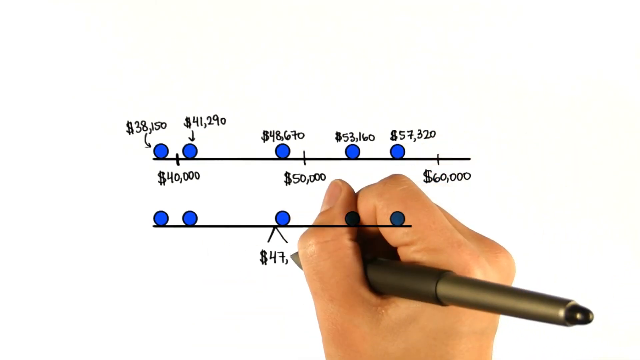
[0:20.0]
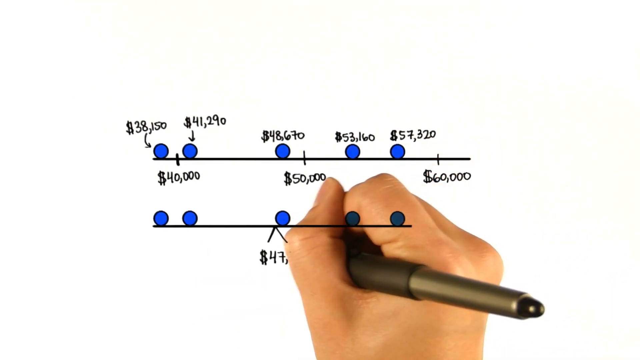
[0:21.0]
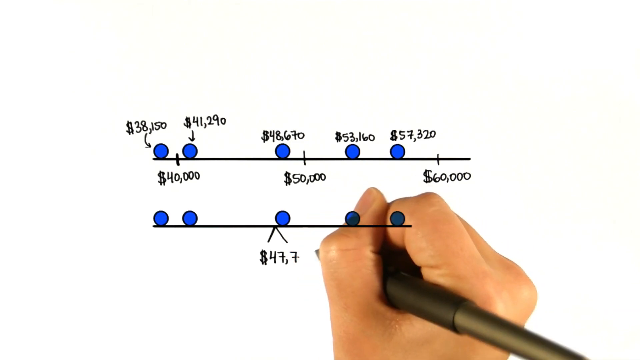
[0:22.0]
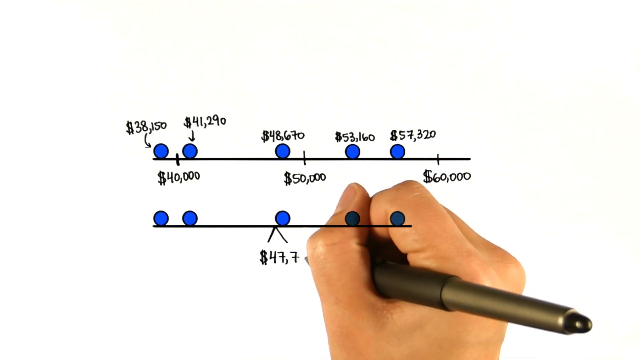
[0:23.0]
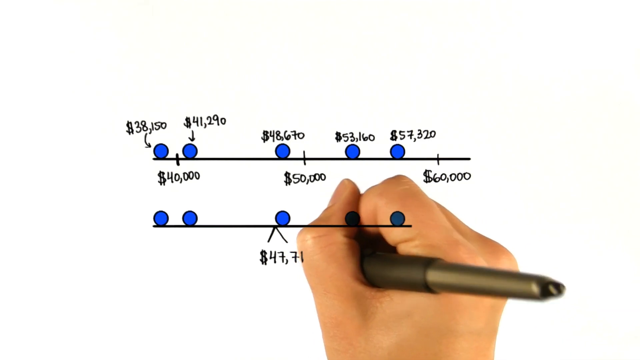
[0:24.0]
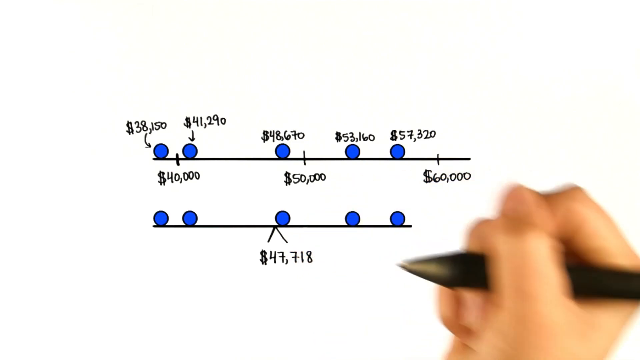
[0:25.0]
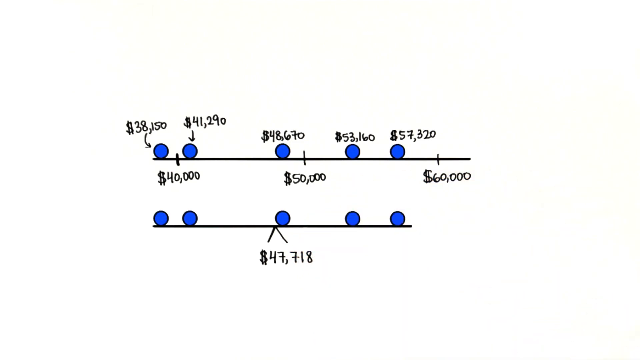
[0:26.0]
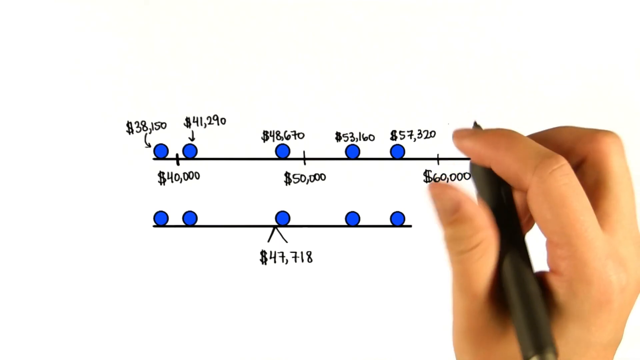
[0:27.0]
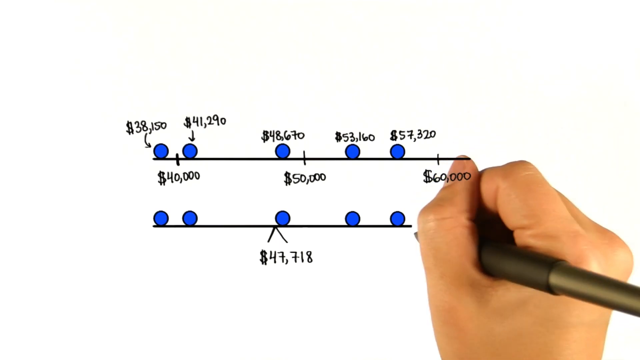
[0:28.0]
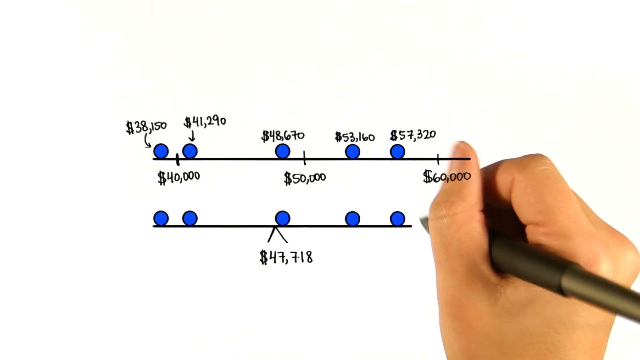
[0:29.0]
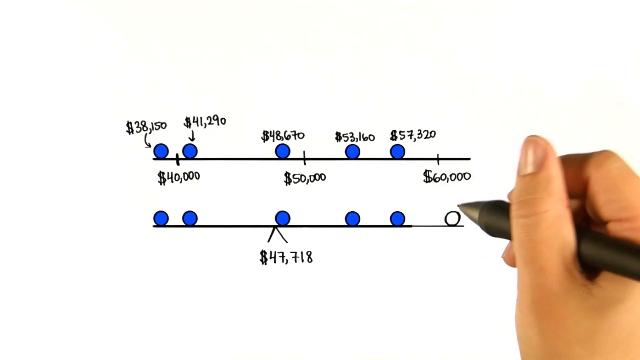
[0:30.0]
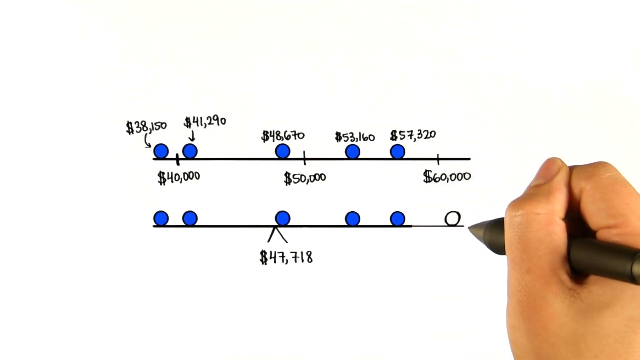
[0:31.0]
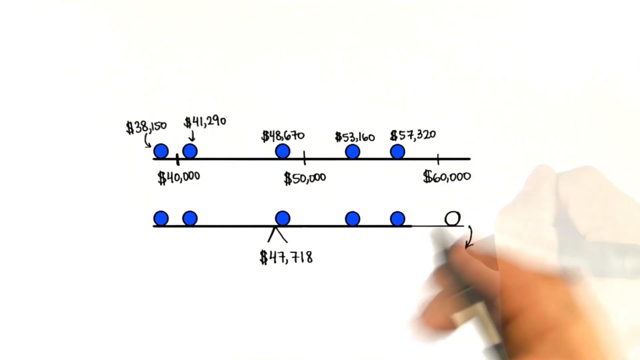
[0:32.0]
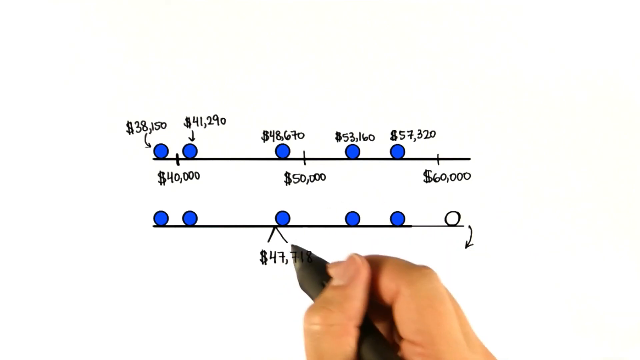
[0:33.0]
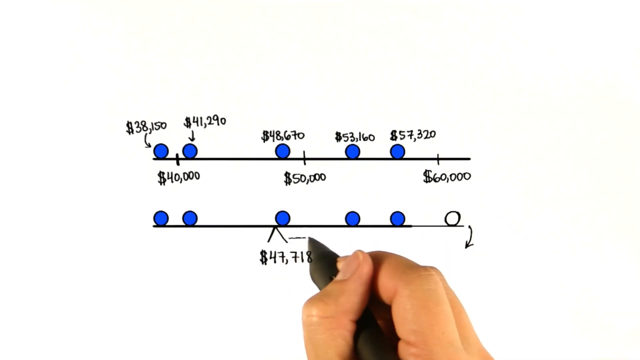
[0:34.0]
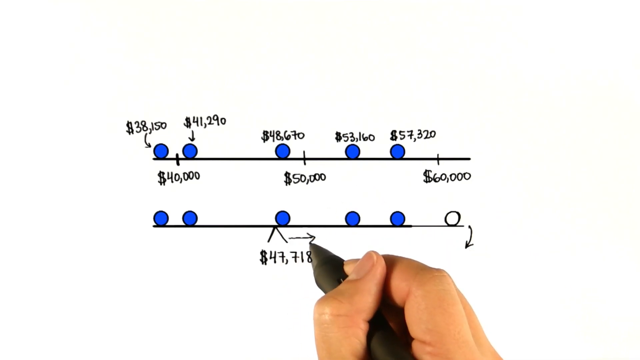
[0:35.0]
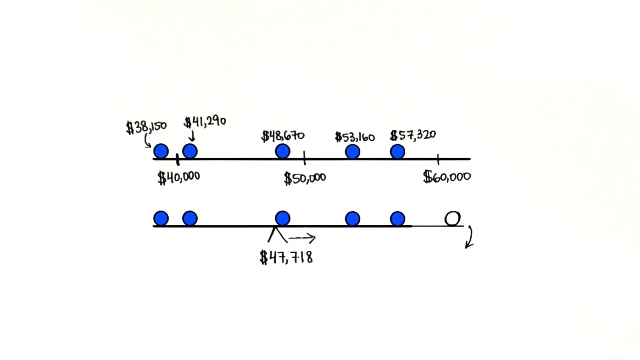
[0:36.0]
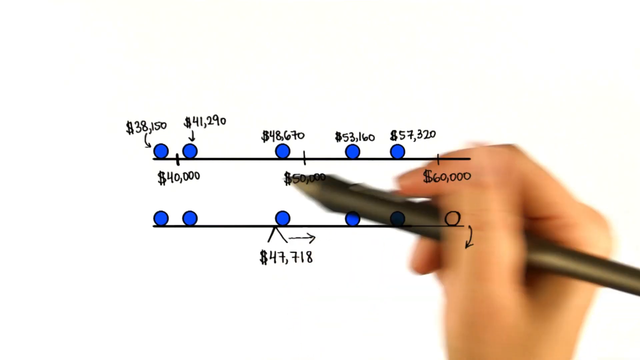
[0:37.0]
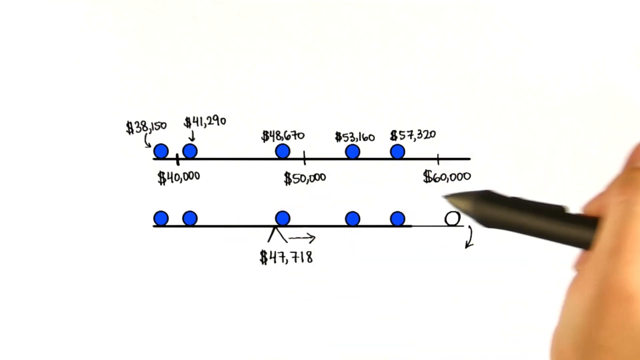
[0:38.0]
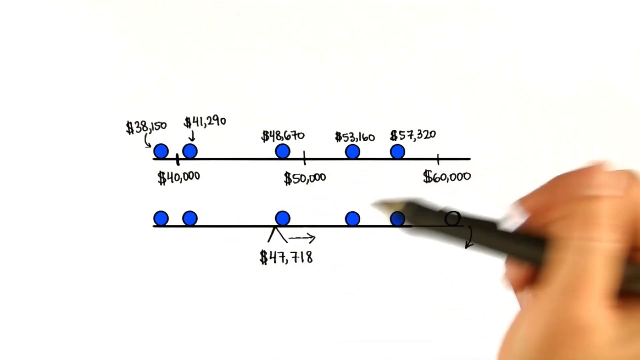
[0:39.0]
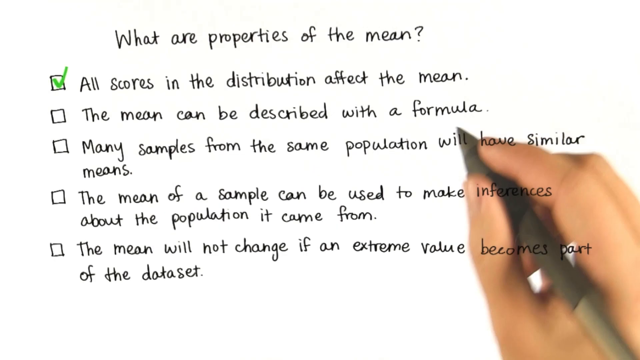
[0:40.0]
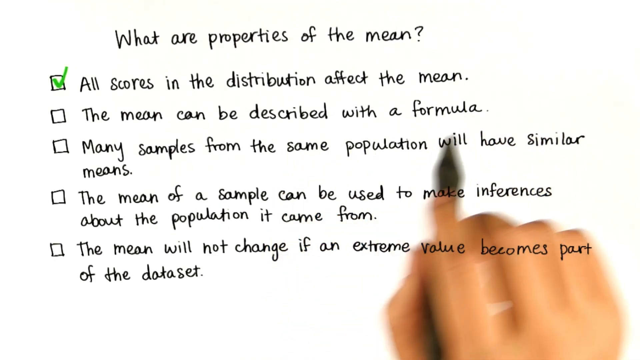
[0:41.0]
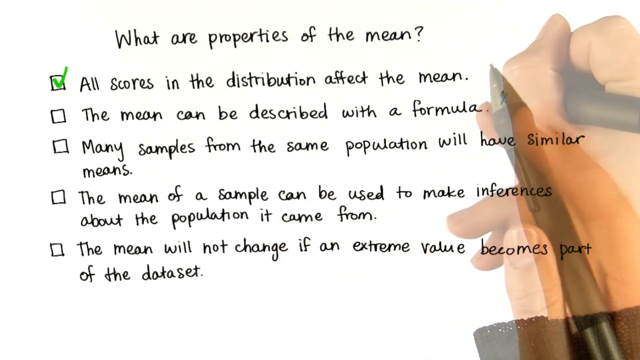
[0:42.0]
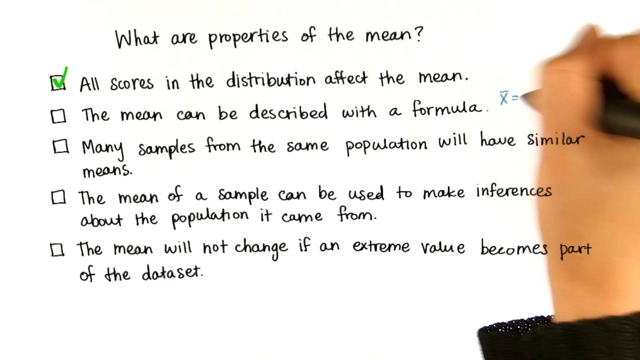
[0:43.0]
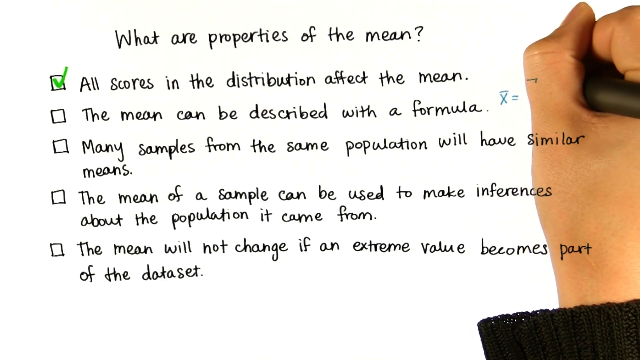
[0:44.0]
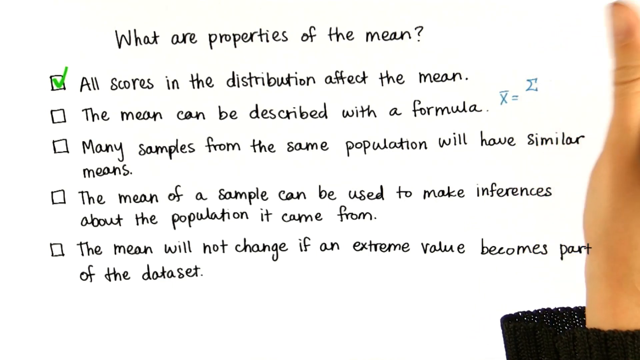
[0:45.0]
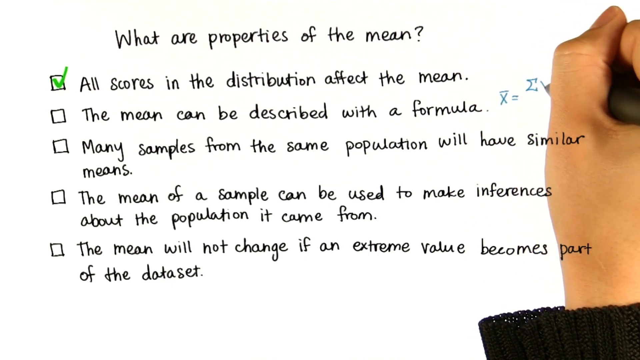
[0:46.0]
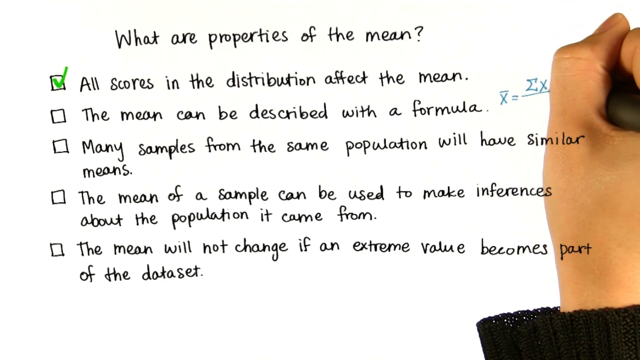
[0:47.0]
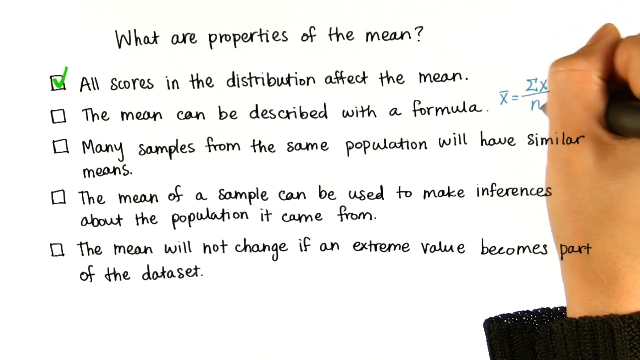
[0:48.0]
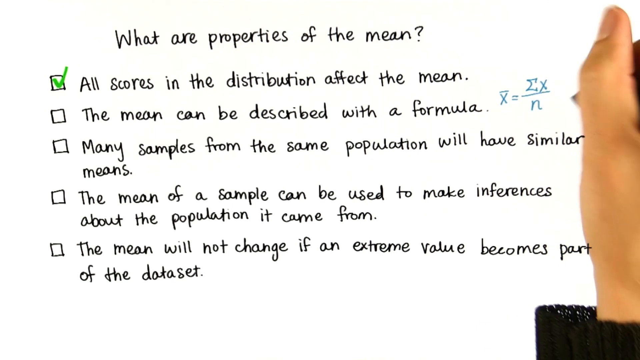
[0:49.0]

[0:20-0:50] A person holds a pen in his right hand over what appears to be some sort of mathematical equation. The pen is red with a black rubber part in the middle. There are two lines with many blue balls on them, and markers between the blue balls show a dollar value for each. The person works on the second line at the bottom, seemingly estimating the value of the blue balls on that line, and moves the pen back and forth along the blue balls and the lines. The scene then turns to another page titled "What are Properties of the Means?", with five bullet points of explanation. The first box is already checked off. He then writes out an equation right beside the second bullet point.